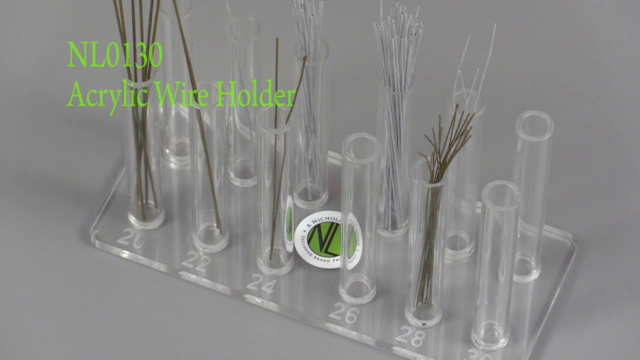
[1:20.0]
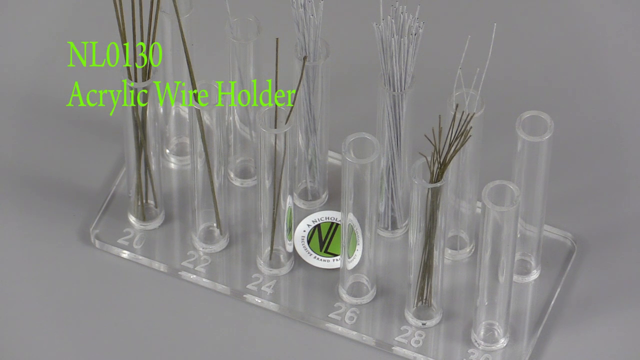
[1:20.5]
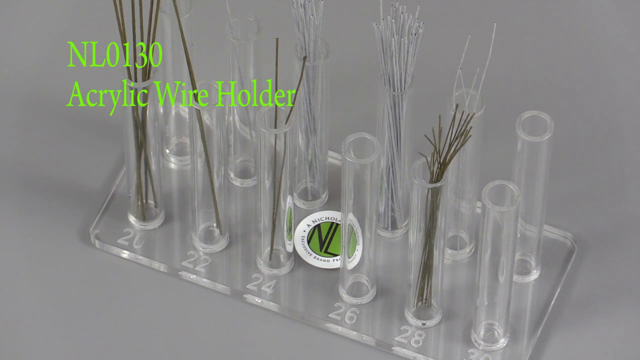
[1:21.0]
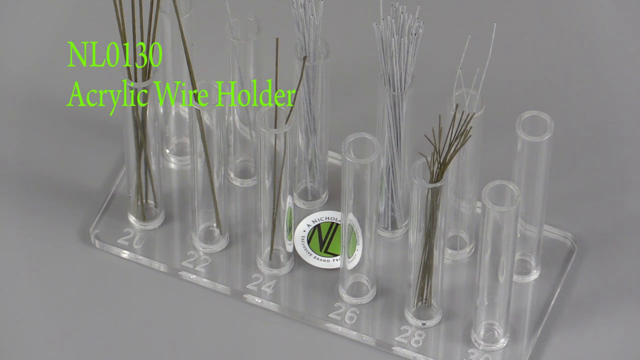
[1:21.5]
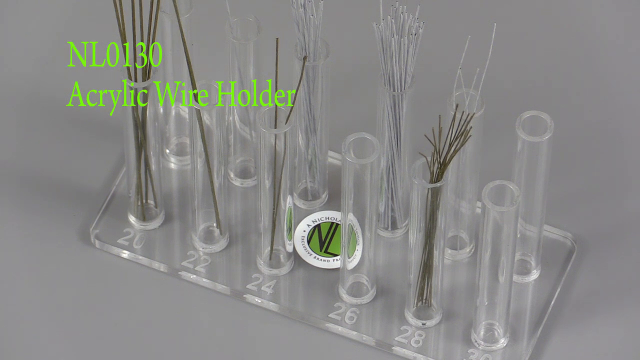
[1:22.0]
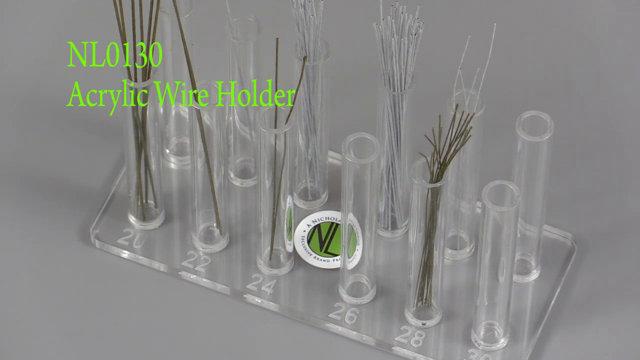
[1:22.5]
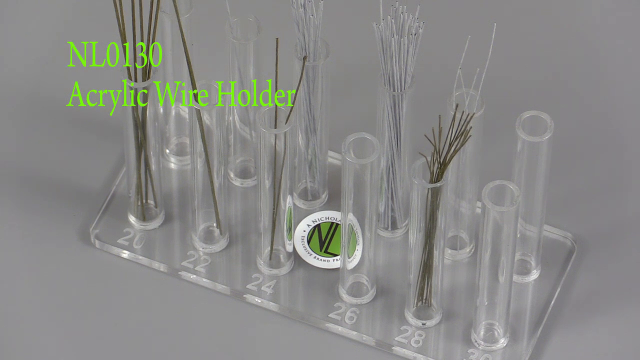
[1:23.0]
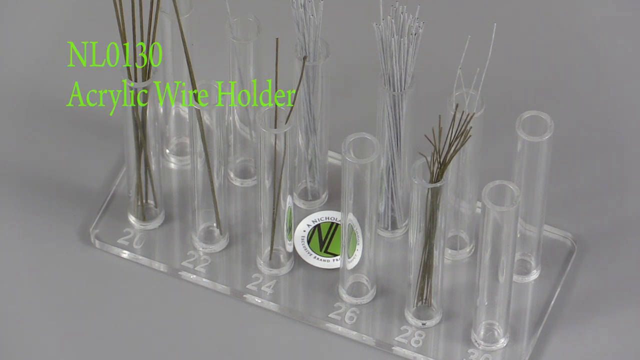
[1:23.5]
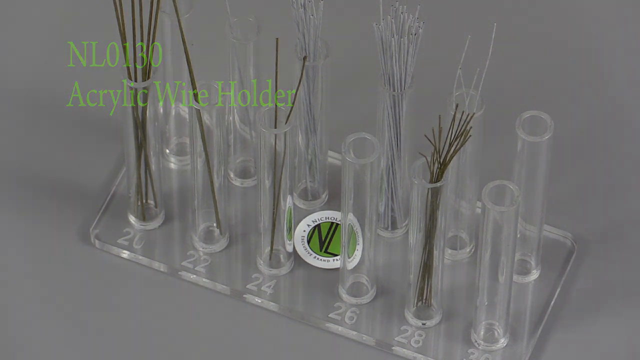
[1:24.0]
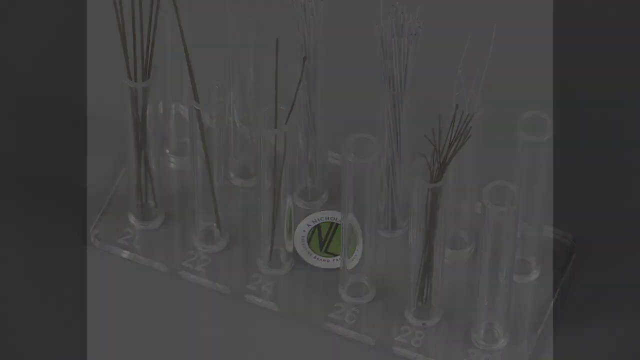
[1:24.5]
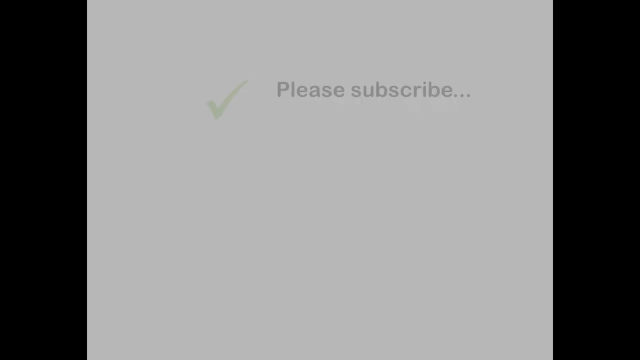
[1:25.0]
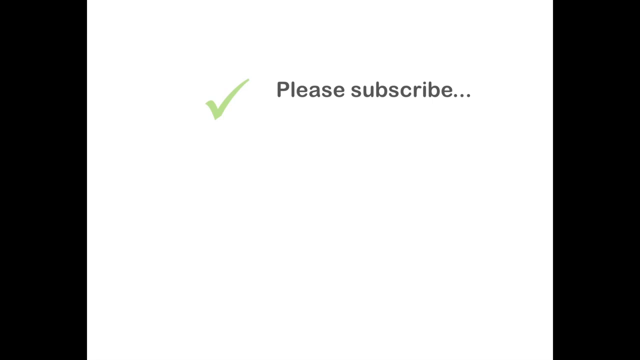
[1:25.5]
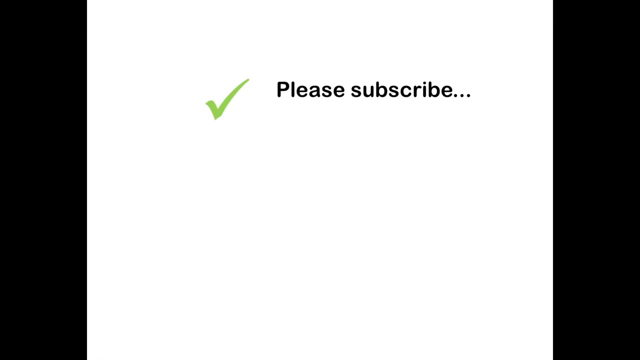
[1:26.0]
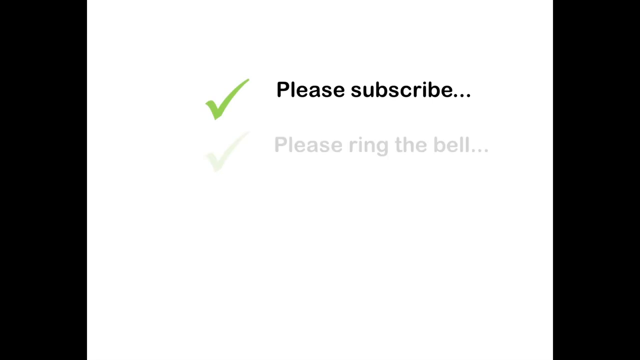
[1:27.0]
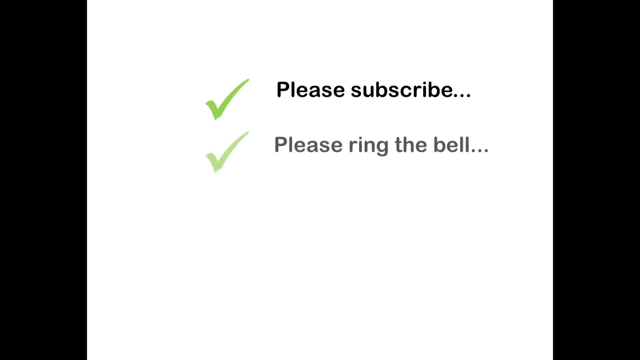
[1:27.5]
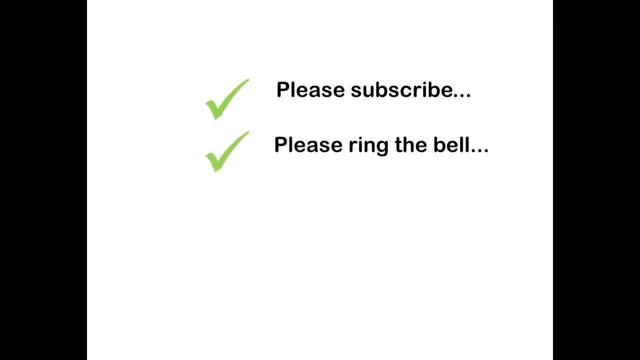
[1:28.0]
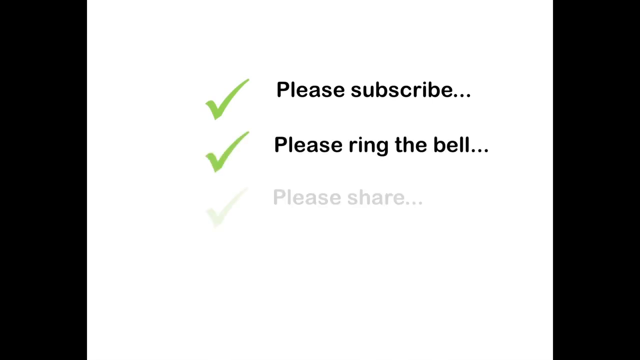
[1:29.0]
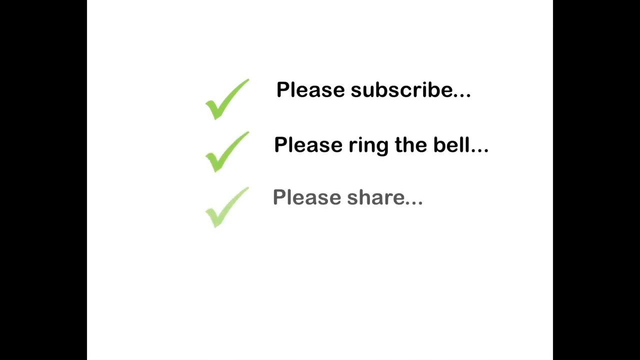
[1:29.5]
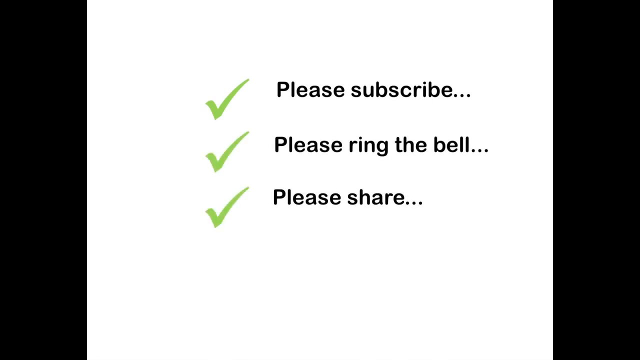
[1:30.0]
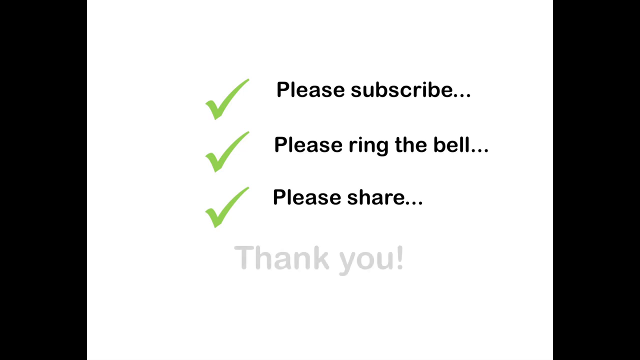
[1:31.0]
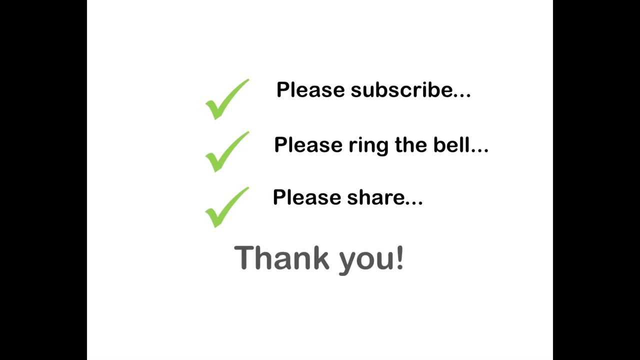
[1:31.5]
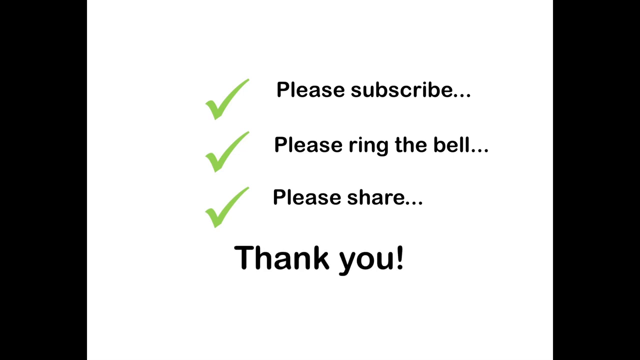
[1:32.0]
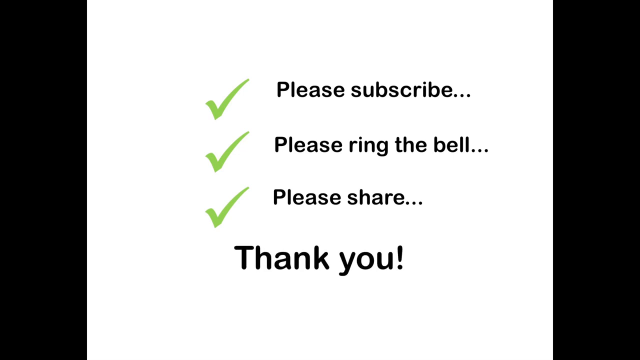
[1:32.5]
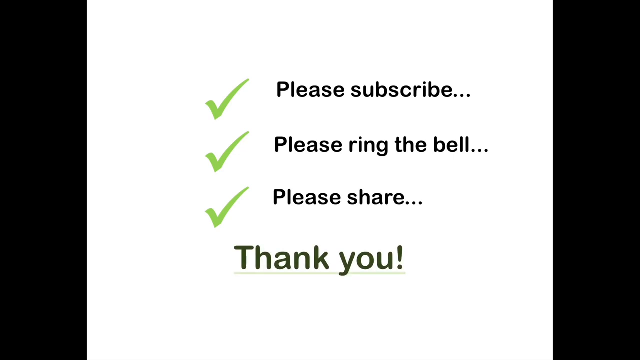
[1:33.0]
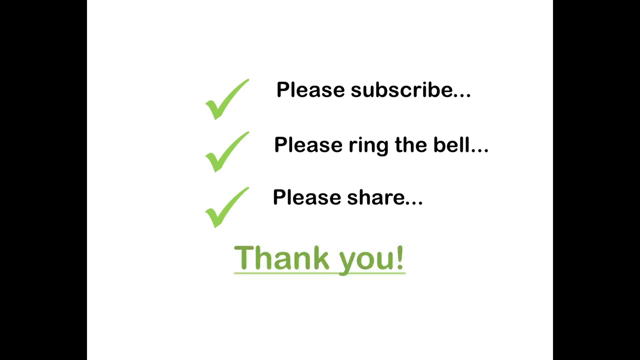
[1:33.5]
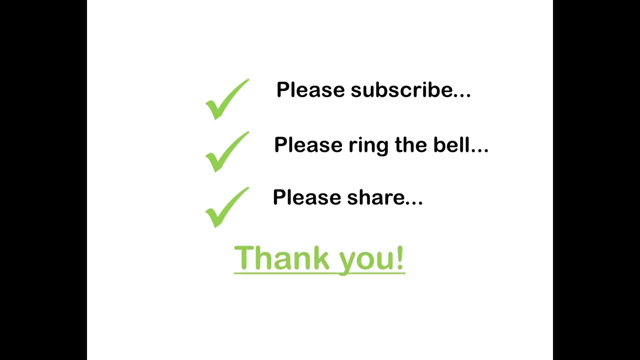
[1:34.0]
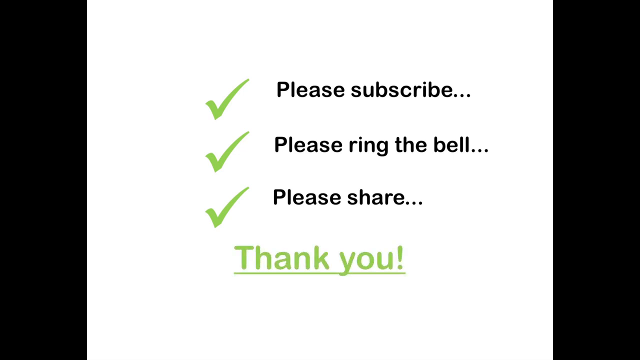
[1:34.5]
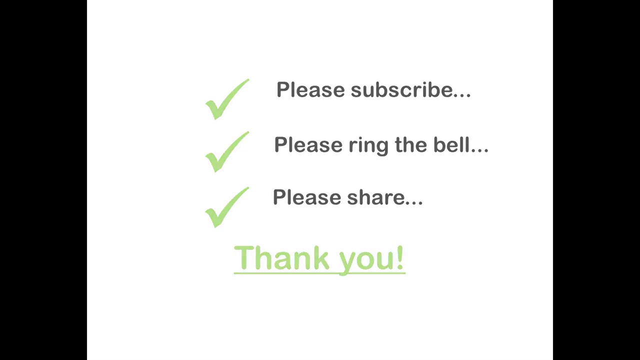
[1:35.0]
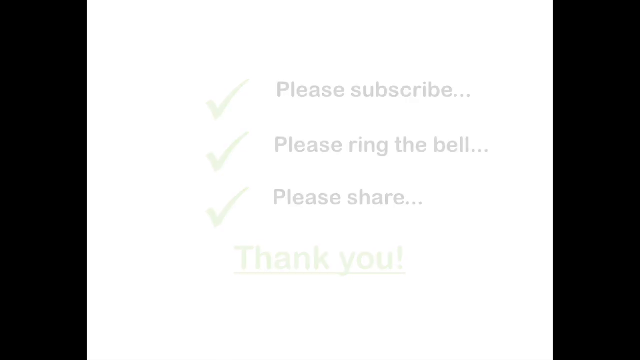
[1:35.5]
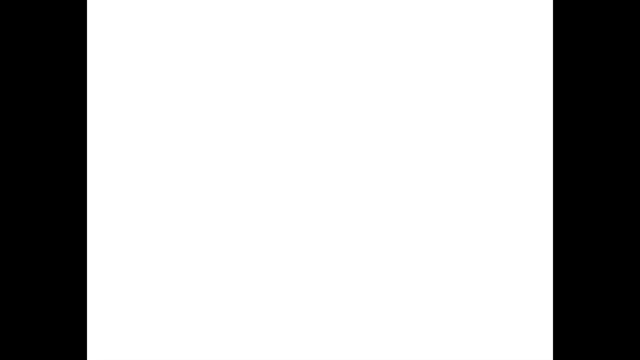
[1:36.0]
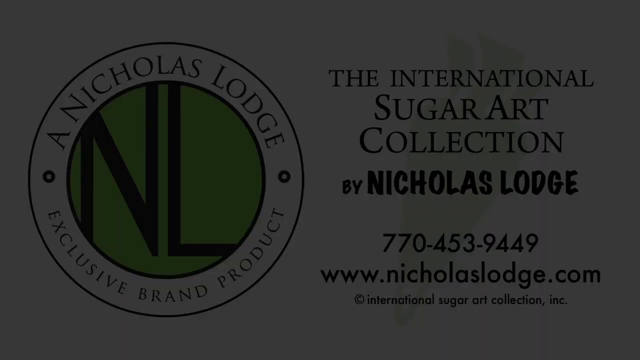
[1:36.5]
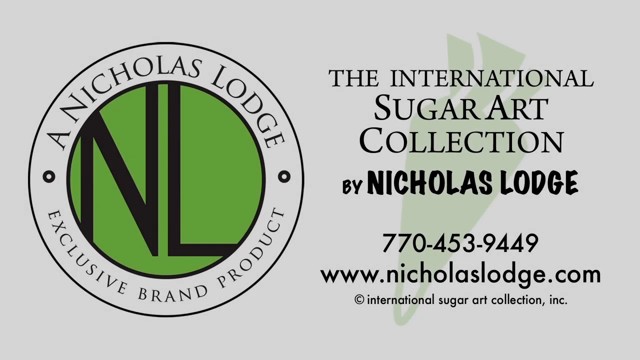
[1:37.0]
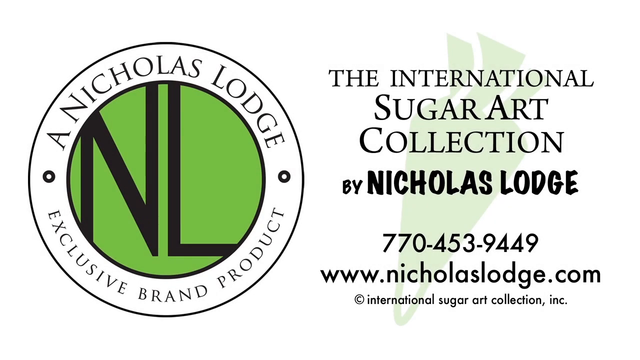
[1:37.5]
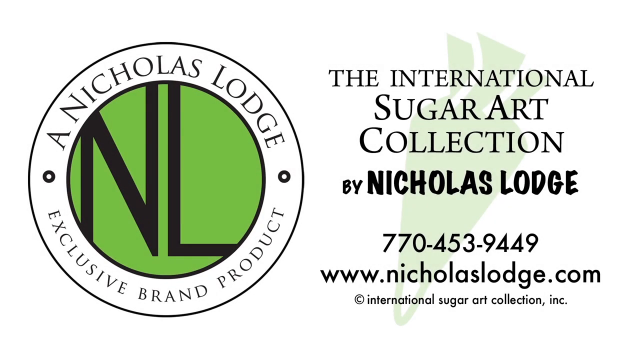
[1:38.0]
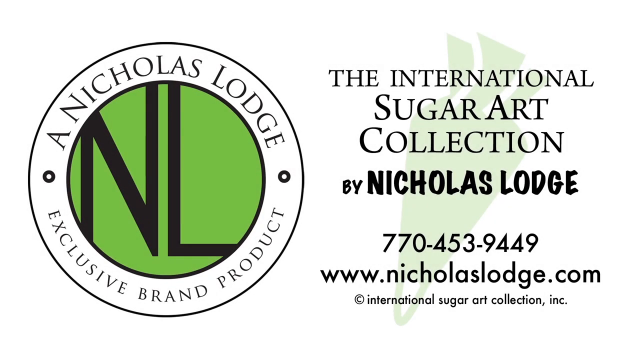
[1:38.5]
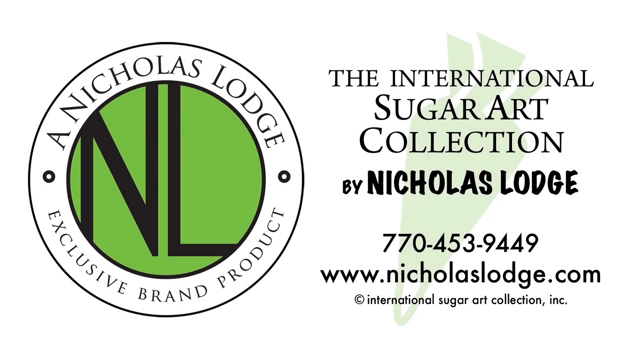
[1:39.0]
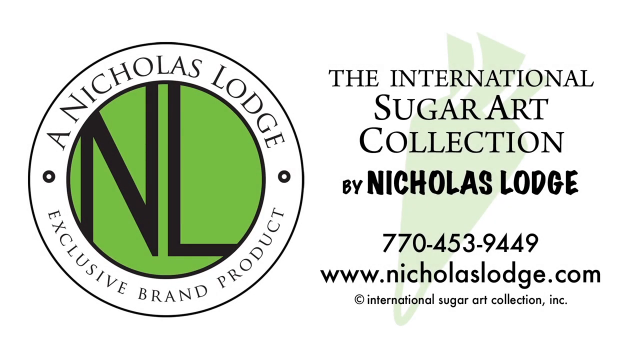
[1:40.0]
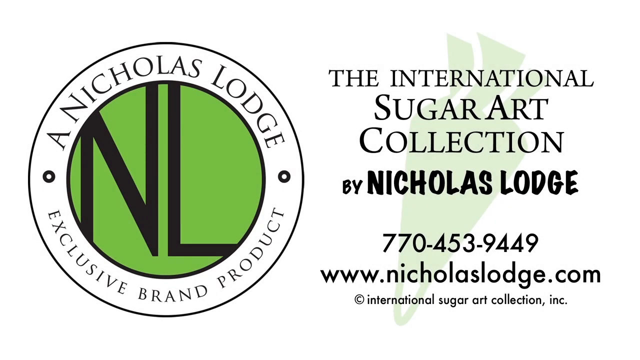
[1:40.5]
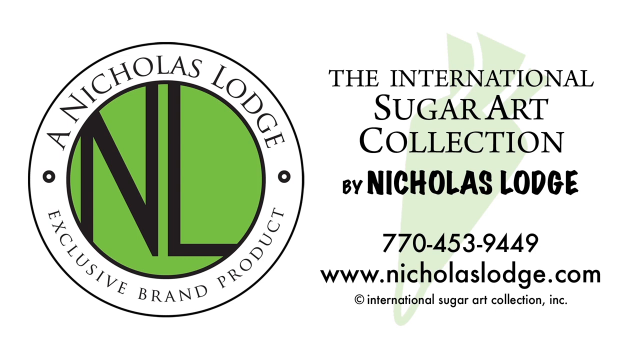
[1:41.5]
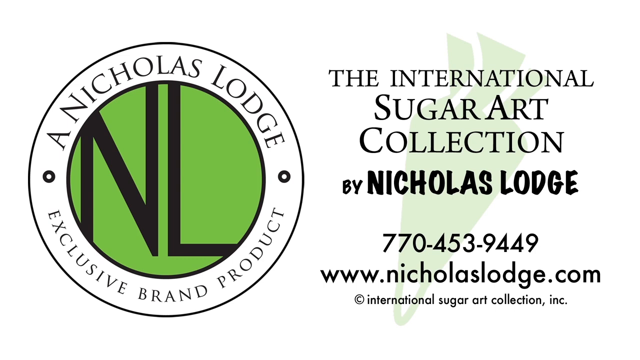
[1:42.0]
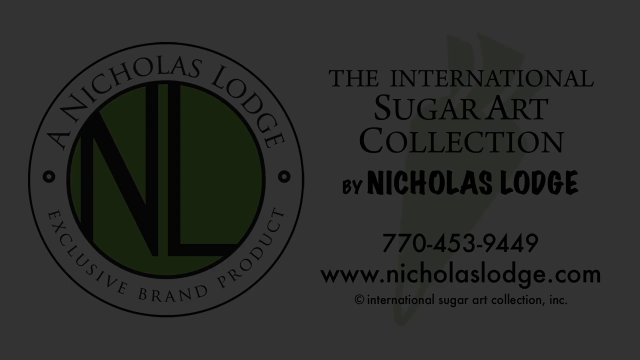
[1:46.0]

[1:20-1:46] The 12 acrylic wire holders are still shown. An end screen follows with a white background and check marks: the first item asks people to subscribe, the second asks people to call, and the third asks people to share. After that, a thank-you appears. A closing sequence then shows the company name, Nicolas Lodge, with the logo, and on the right side the company's contact number and web address.